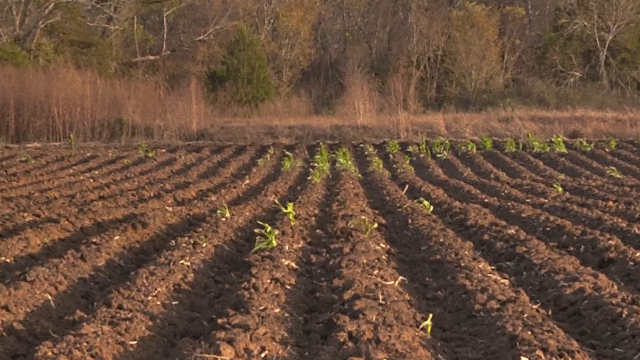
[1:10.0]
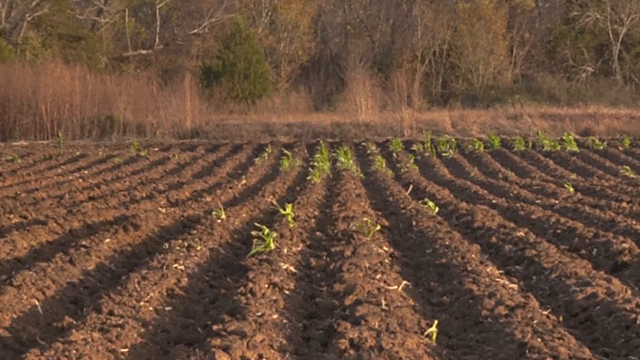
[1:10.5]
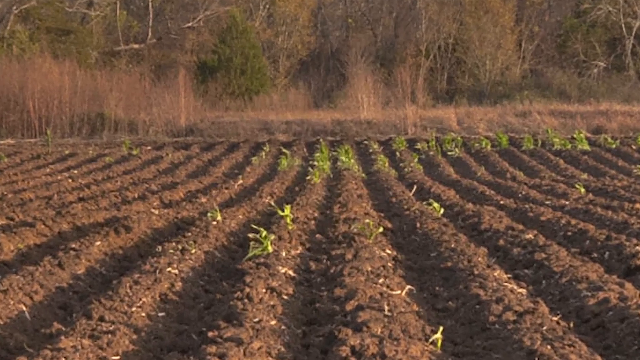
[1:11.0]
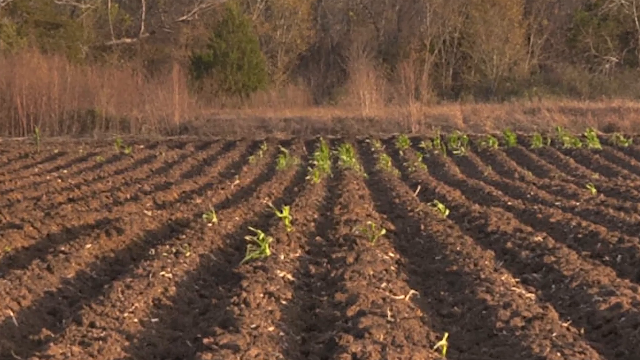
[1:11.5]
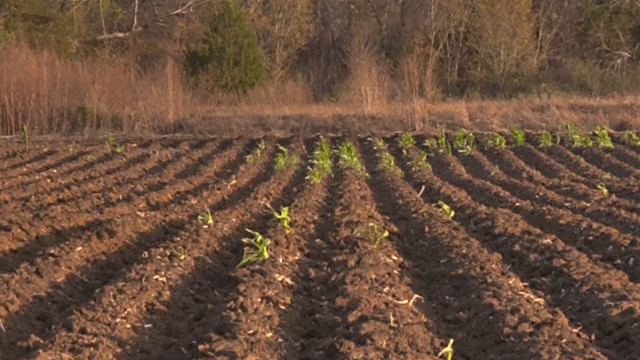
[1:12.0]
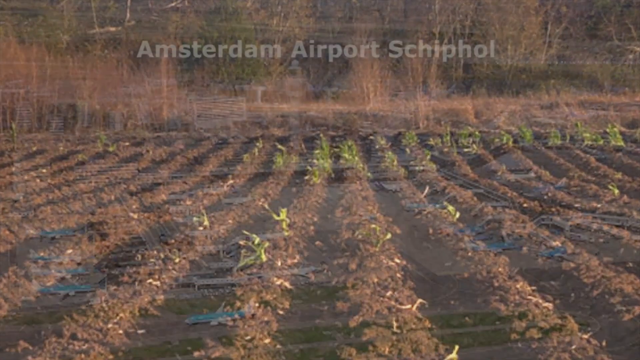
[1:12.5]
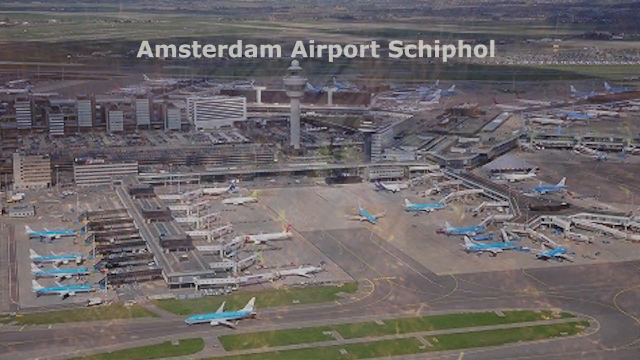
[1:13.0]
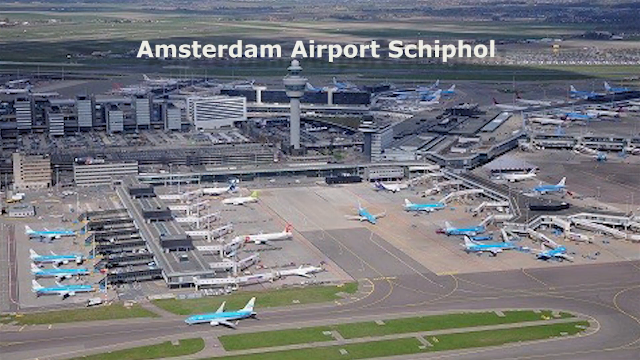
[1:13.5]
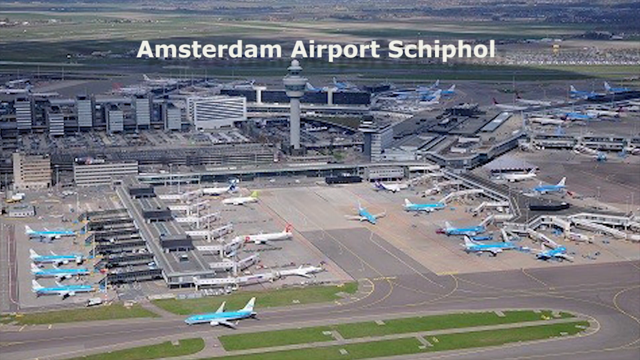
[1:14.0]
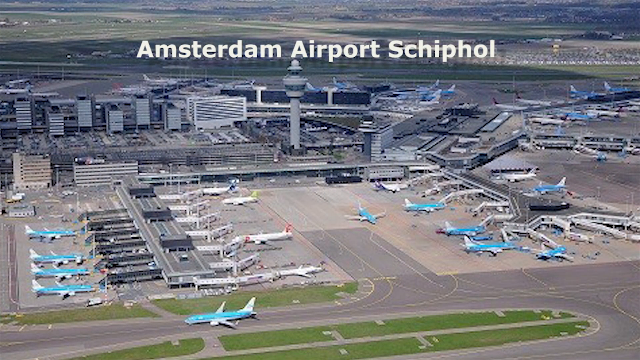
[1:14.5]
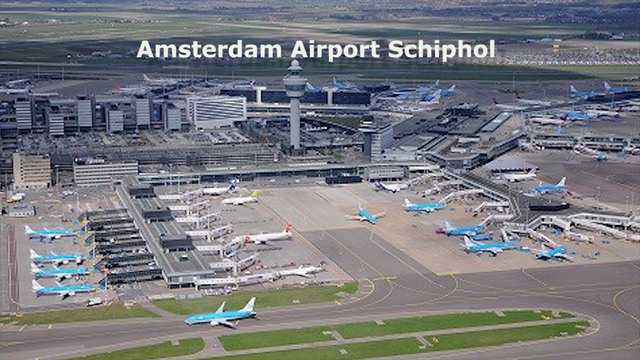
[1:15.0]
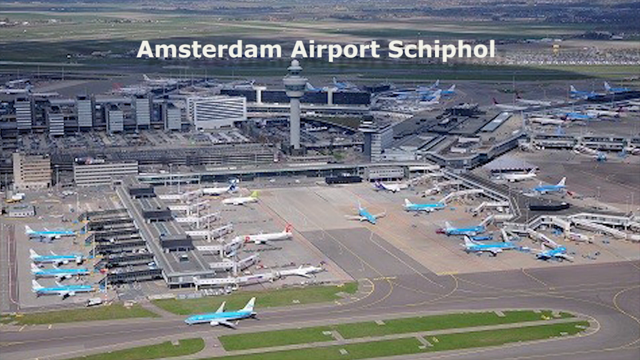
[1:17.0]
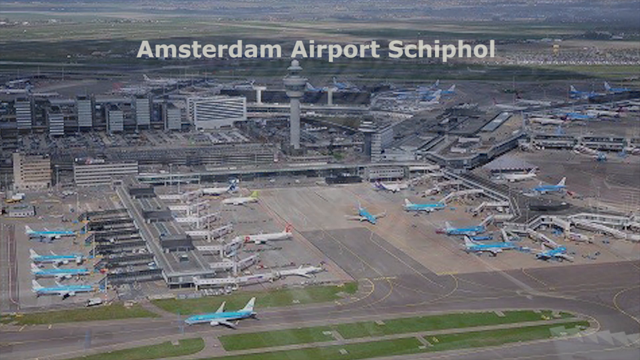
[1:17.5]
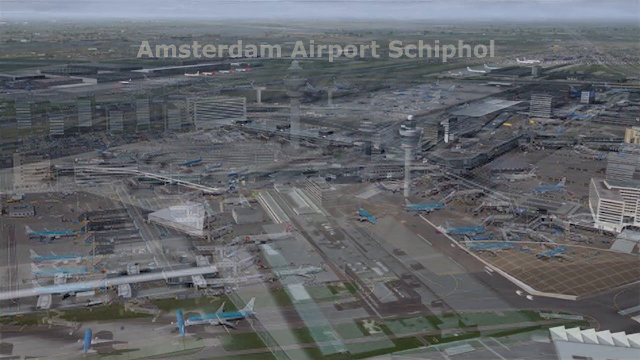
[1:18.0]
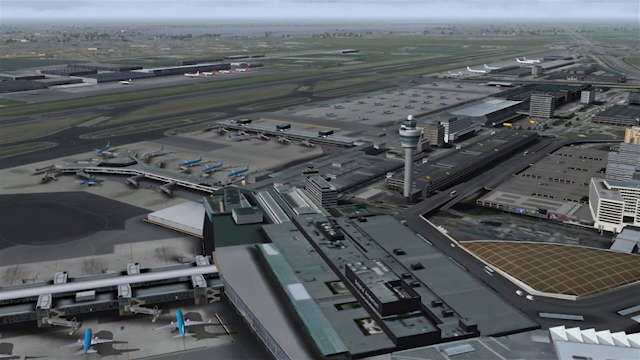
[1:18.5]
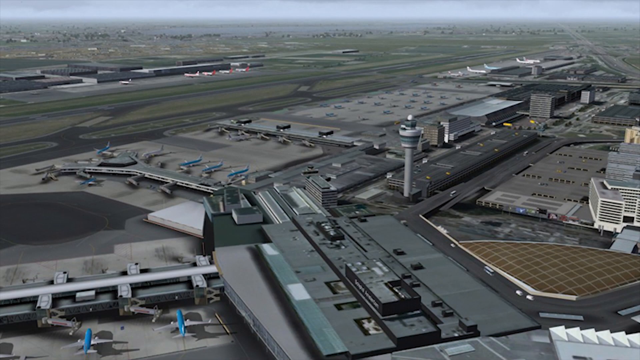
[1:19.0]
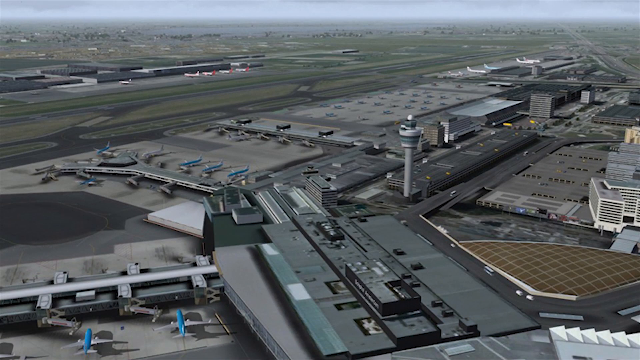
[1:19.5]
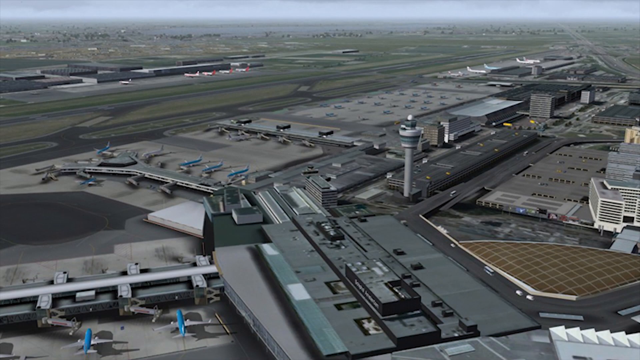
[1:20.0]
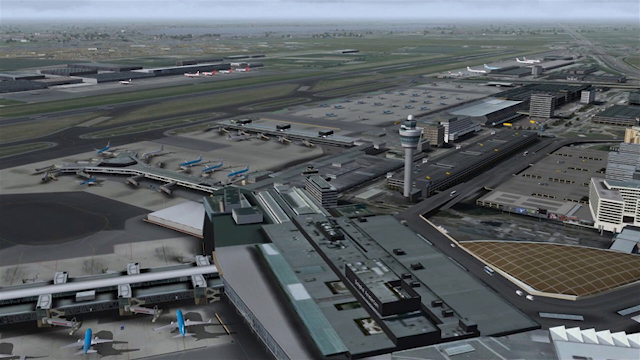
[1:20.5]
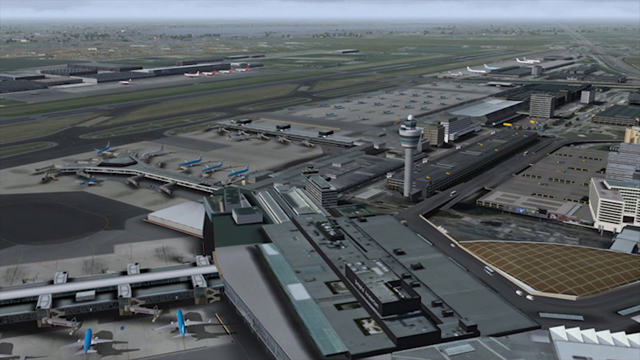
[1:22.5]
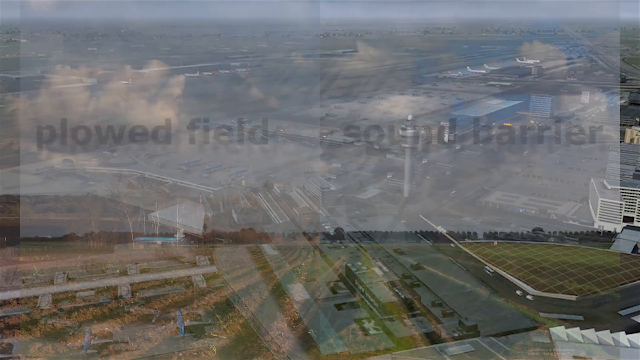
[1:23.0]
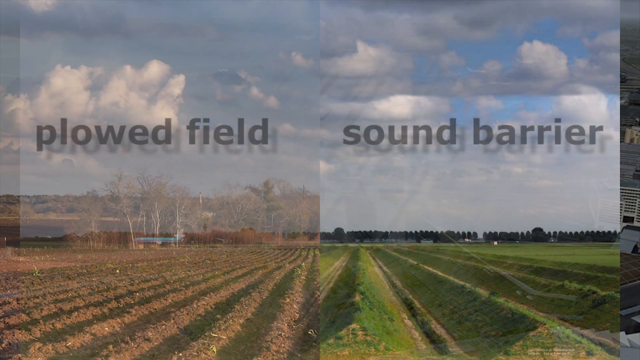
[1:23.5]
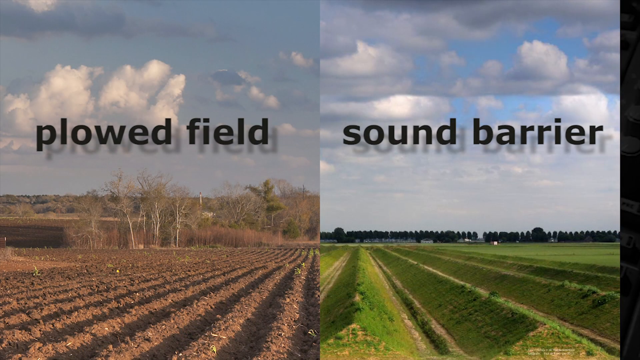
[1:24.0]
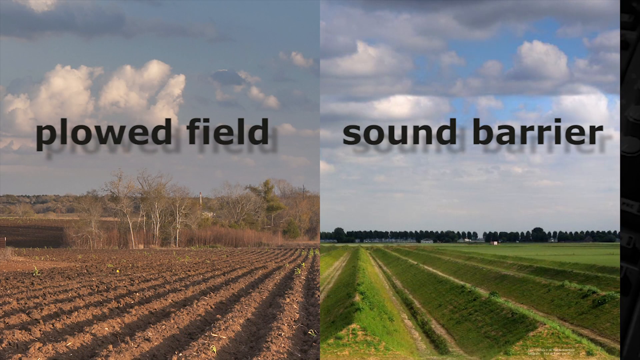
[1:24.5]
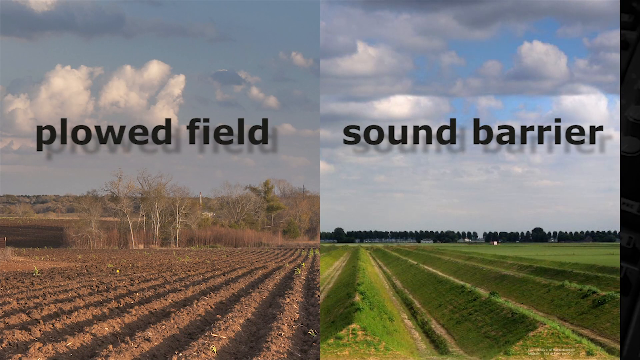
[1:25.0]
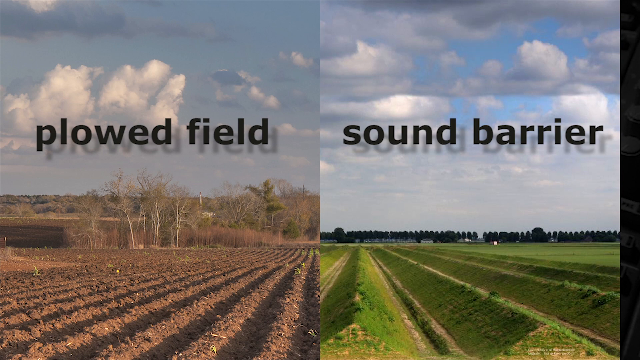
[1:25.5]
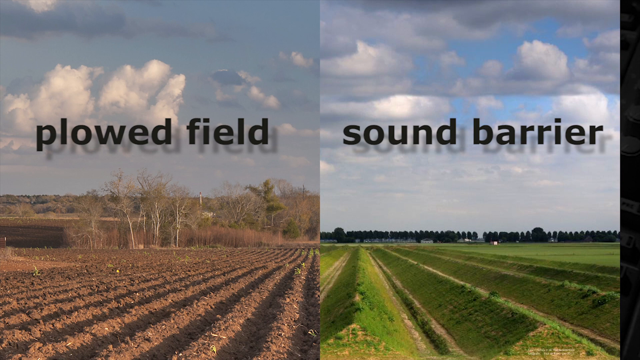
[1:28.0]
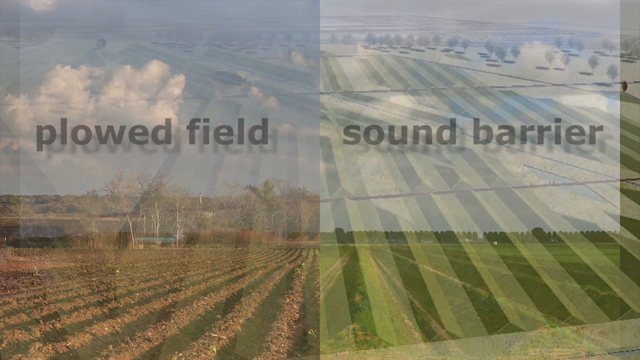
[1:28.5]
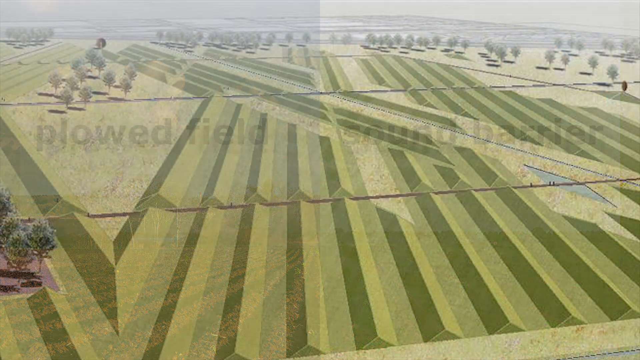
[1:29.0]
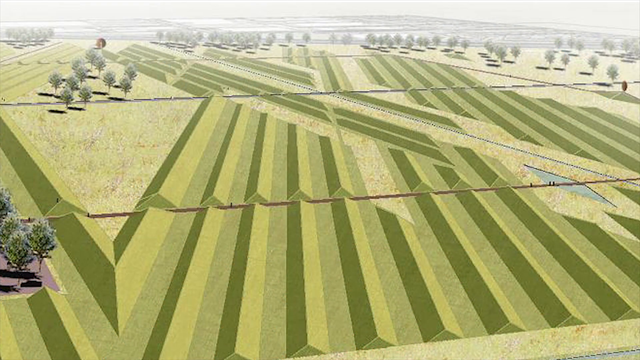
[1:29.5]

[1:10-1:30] Rows of a farm plot are visible, about 10 rows of planting in the frame. Beyond them are some dried brush and medium-growth forest that appears to still be brown from the passing winter. There appears to be some small green growth in the field that looks new, as if at the beginning of a growing season. The camera zooms forward. The video then fades to a scene of Amsterdam airport, with white sans-serif words in the upper third of the frame reading "Amsterdam Airport Schiphol". It is a medium aerial shot looking down, apparently from some type of aerial drone, with the control tower in the center of the frame. Around it are several gate areas: from left to right, four blue commercial jets parked at their gates, then four white jets at their gates. A blue jet looks like it is taxiing away from the gate area toward the runway, and at the very bottom of the frame one blue jet is on the runway or taxiing toward it. Further right are four more jets at their gates, and two jets are visible on the other side of the terminal area. In the background beyond the lettering are green grass and what appear to be other runways or parking areas. The next shot fades to another airport view looking outward from the terminal toward the runways. The runways take up the upper left third of the frame, while the roof of the concourse and terminal takes up the lower center-right third. On the right side is parking, and the air traffic control tower is still visible a little right of the middle. A side-by-side comparison then dissolves in. On the left is a plowed field with rows of plowed soil on what appears to be a semi-cloudy day in early spring or late fall, labeled "plowed field" in sans-serif font with a slight drop shadow. On the right is a semi-cloudy scene with clearing blue sky and what appears to be a fertile green field, labeled "sound barrier" in black sans-serif font. The comparison apparently suggests the improvement a sound barrier would yield. The video then shows an aerial view of green crops in a very organized pattern of alternating dark green, light green and medium green rows, which appears to be a drawing or artistic rendering rather than a photograph. The rows extend toward the horizon and are intersected by another set of rows extending toward the horizon on the left. Just before the horizon, small trees are dispersed throughout.